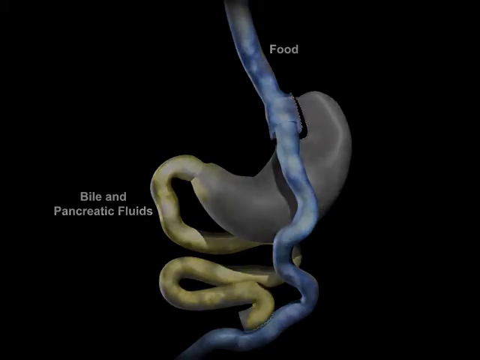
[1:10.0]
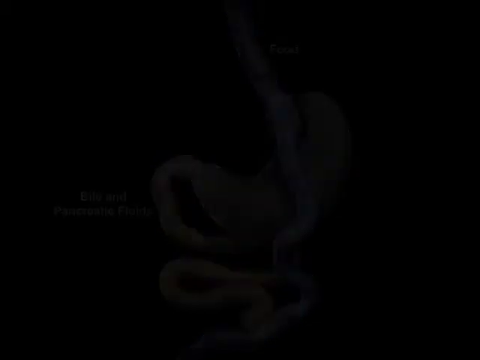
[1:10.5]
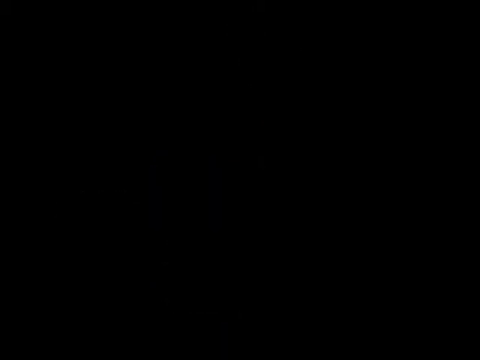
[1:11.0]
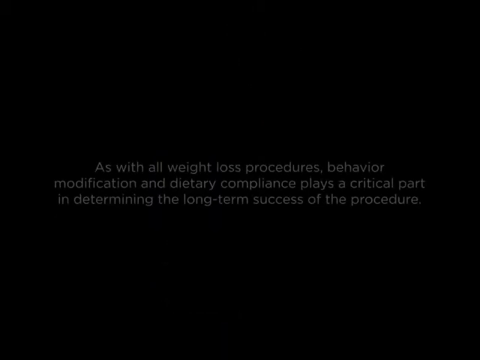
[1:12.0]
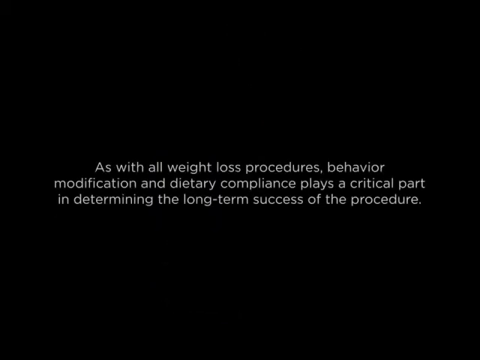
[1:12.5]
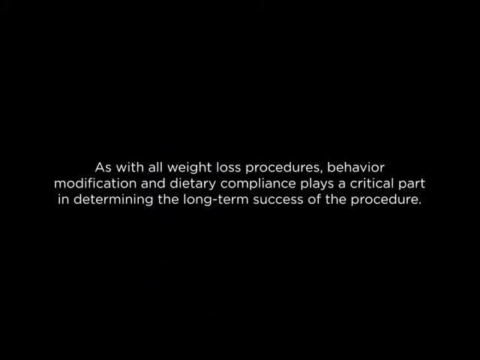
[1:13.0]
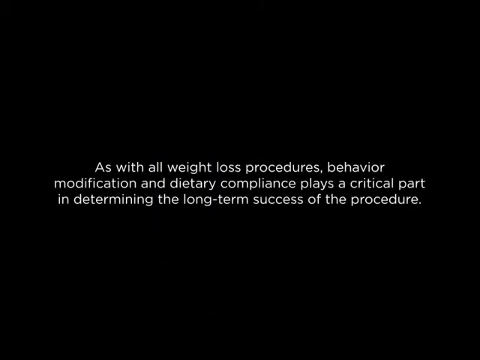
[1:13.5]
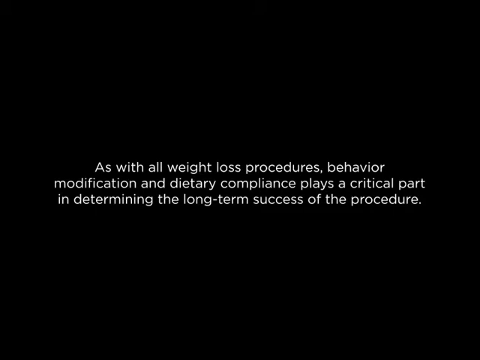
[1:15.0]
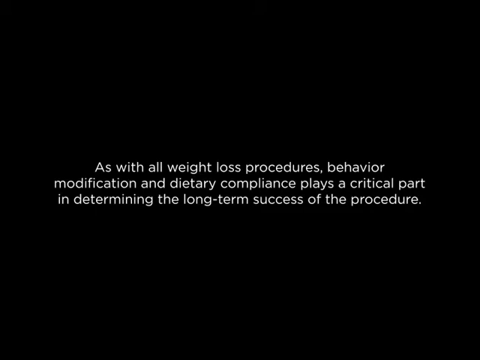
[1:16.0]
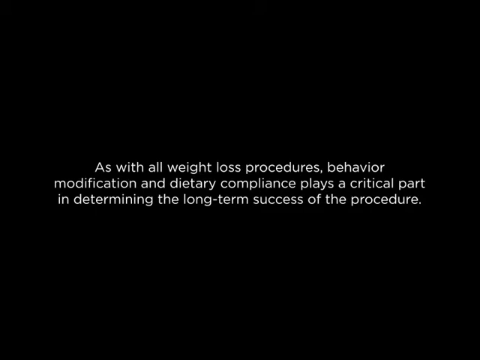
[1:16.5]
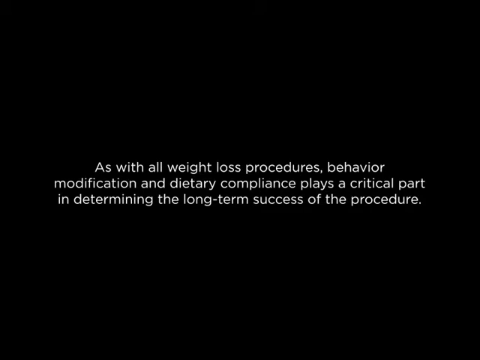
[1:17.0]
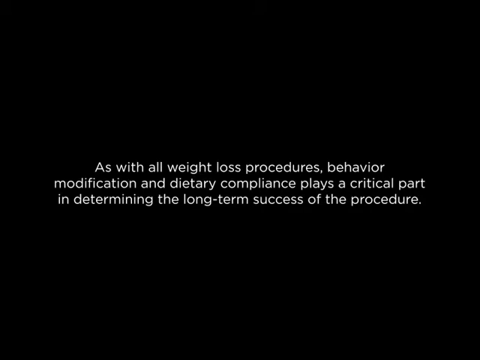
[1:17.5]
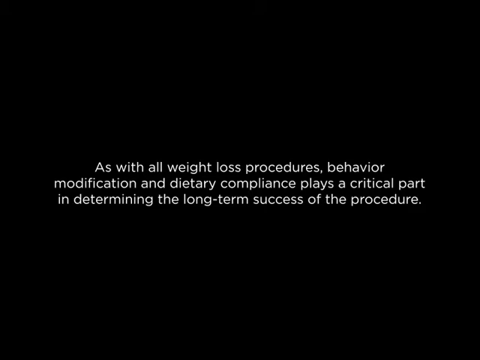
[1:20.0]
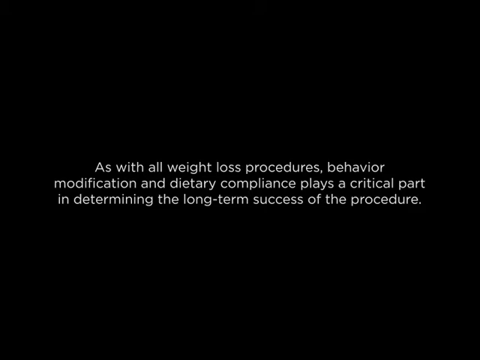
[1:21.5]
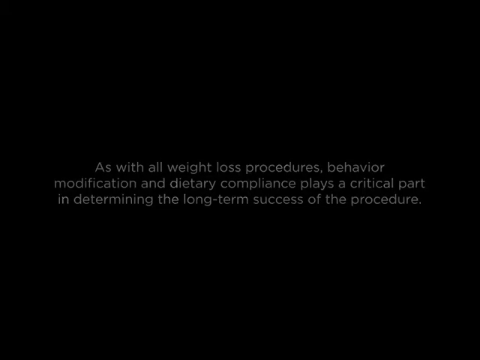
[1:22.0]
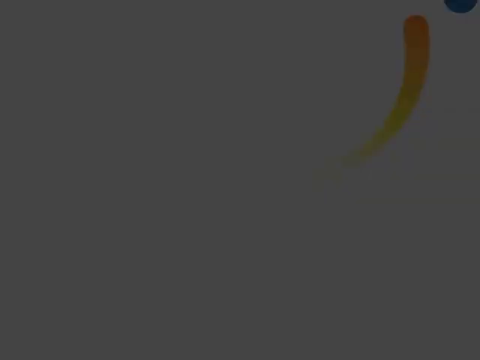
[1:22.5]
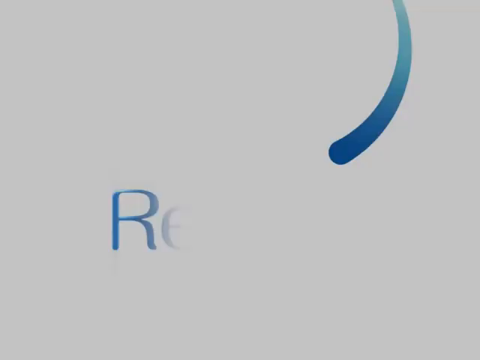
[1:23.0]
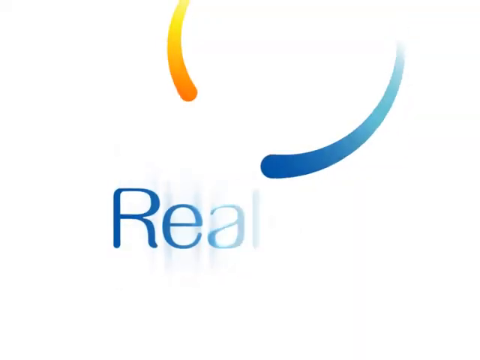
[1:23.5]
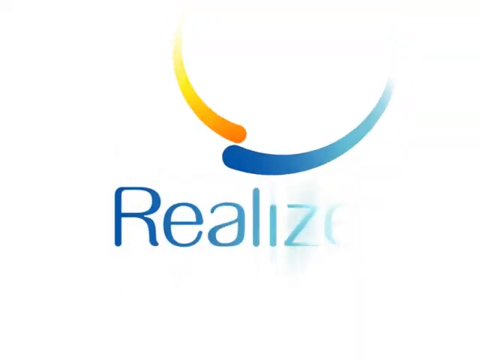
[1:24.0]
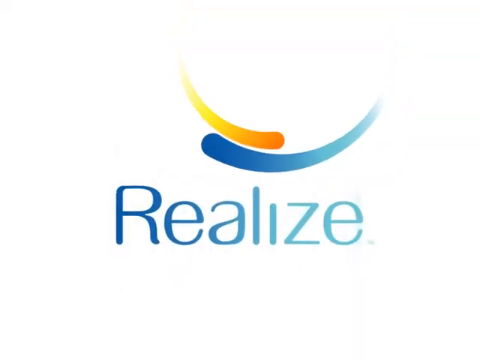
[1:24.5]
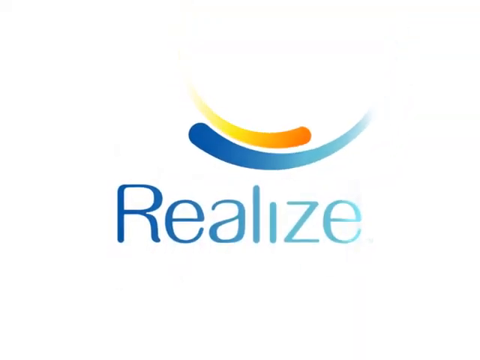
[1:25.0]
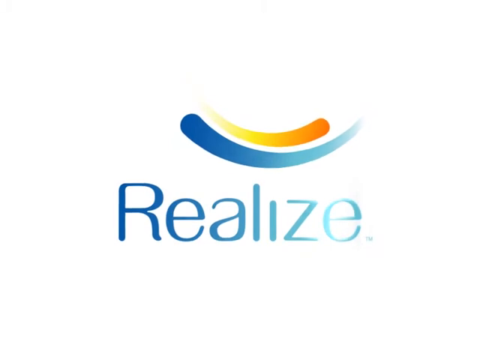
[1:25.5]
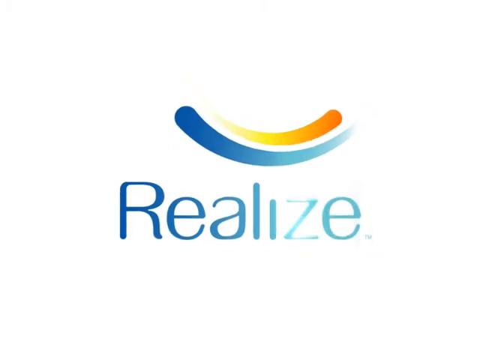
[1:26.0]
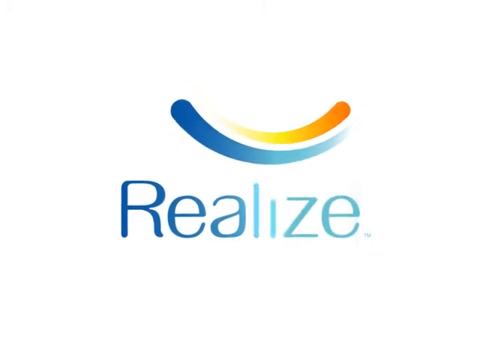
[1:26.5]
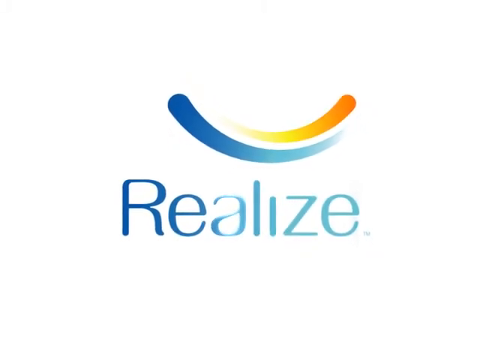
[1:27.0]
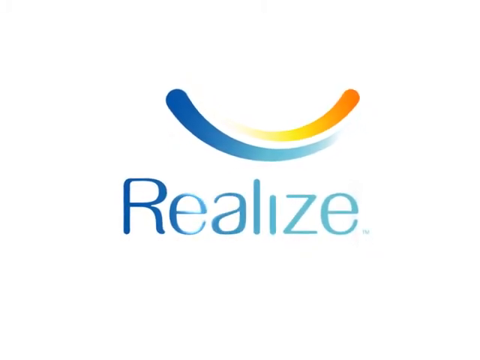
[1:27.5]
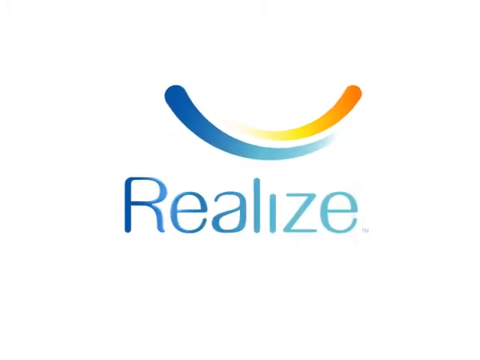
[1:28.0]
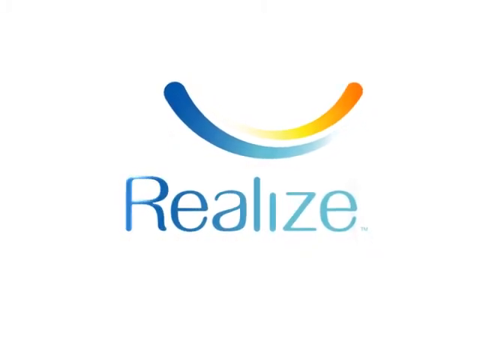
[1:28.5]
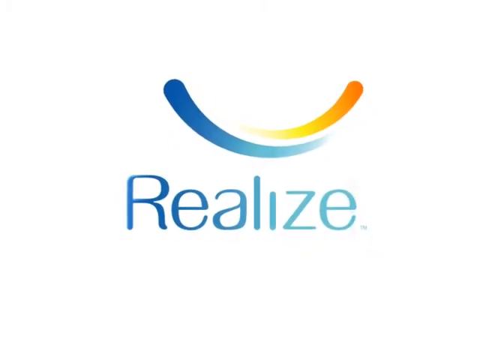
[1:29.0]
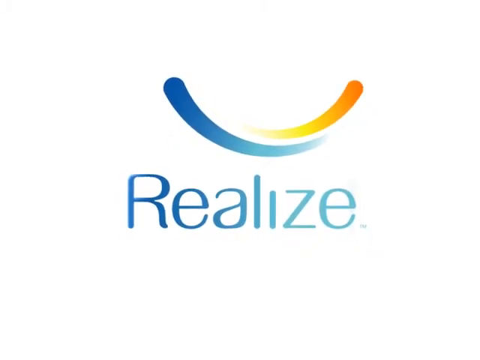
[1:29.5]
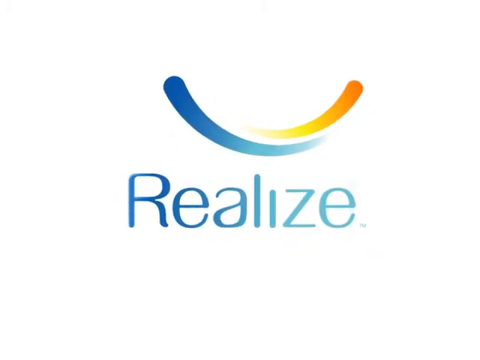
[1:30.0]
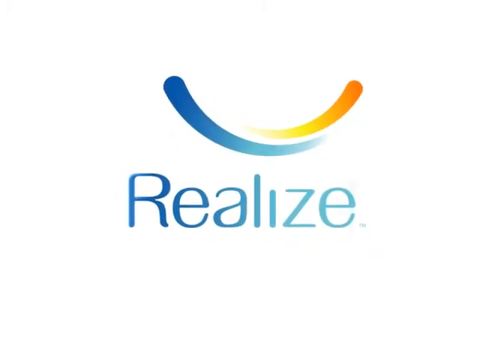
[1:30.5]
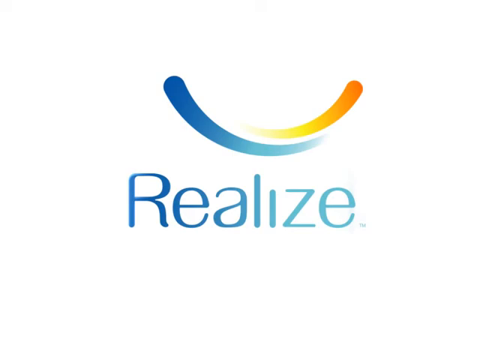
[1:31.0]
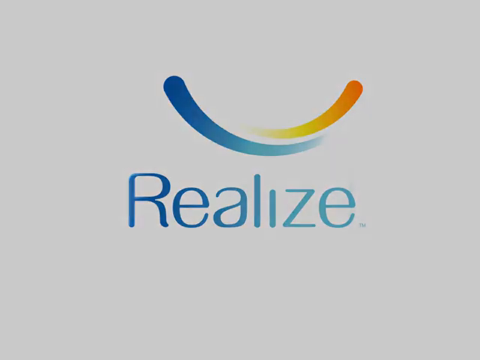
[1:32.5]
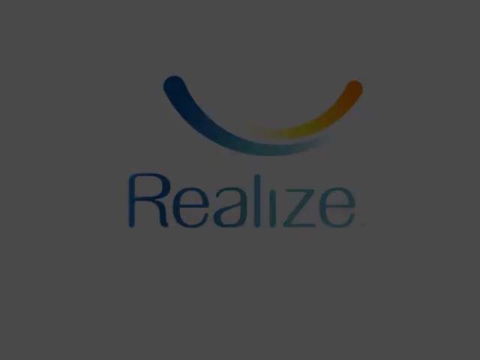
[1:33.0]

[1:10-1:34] The animation depicts the food and the bowel flowing through the gastrically bypassed stomach. Then a sort of black screen appears with white text that says "As with all weight loss procedures, behavior modification and dietary compliance plays a critical part in determining the long-term success of the gastric bypass procedure." It transitions to a sort of end screen with the text "realize" in blue on a sort of white background, with two kind of little marks, almost looking like paint strokes, in blue and orange above the realize symbol, almost forming a U shape, and the words "gastric bypass" underneath. The screen then fades to black. No physical subjects are shown at any point.